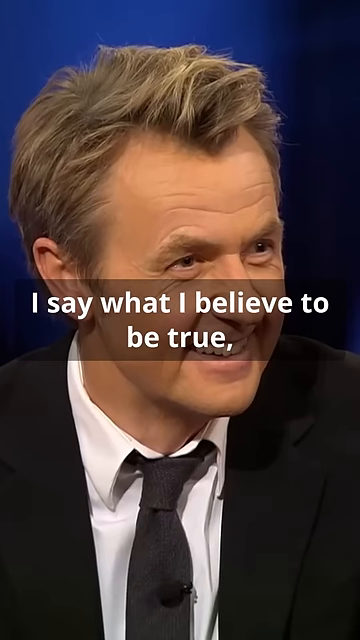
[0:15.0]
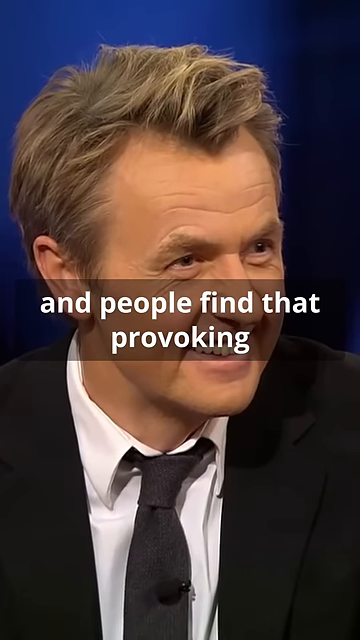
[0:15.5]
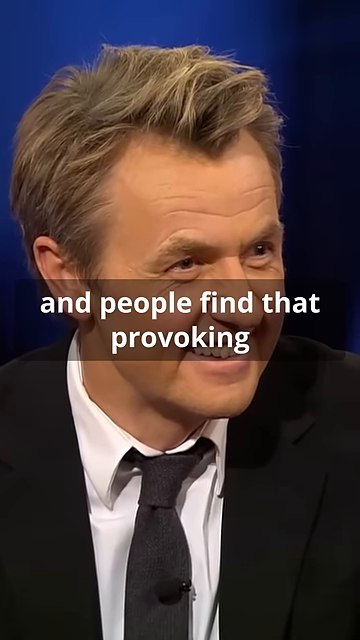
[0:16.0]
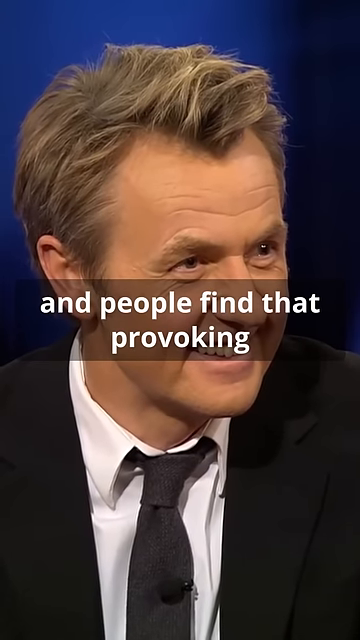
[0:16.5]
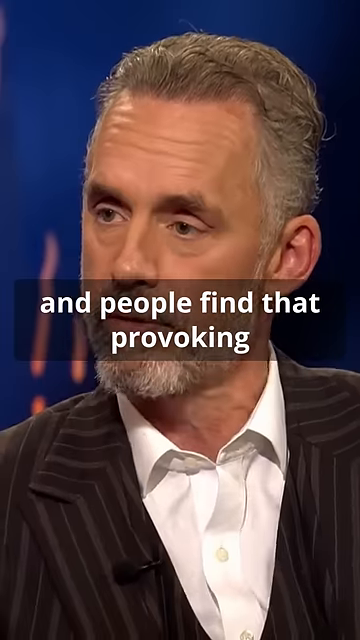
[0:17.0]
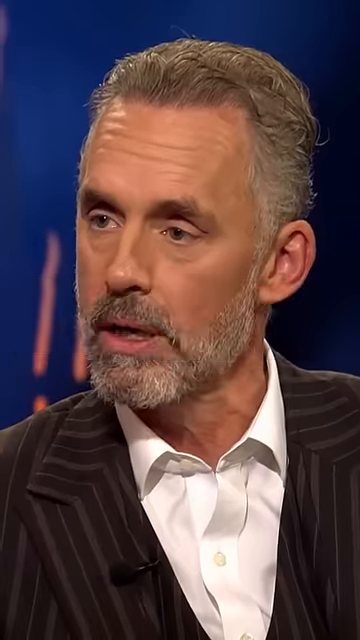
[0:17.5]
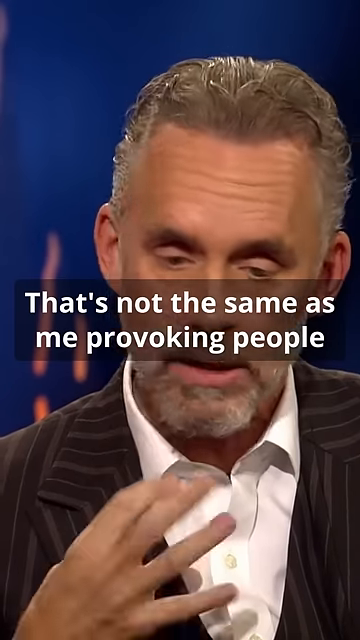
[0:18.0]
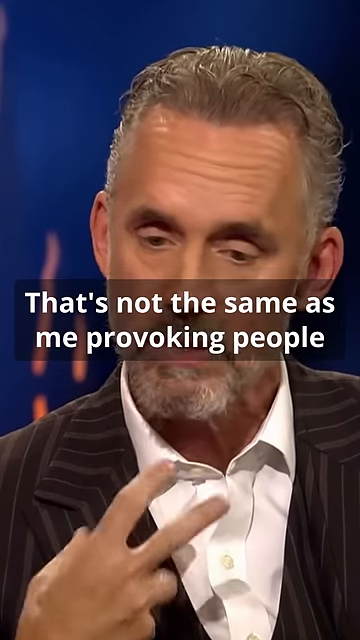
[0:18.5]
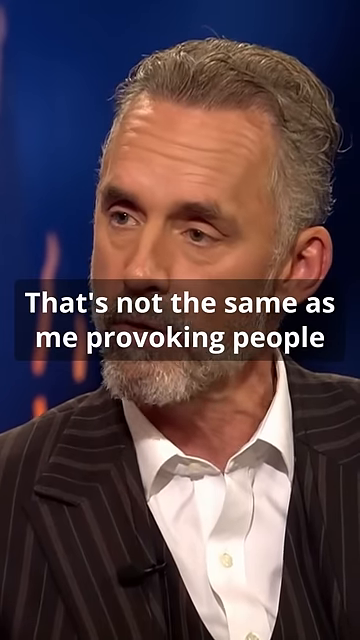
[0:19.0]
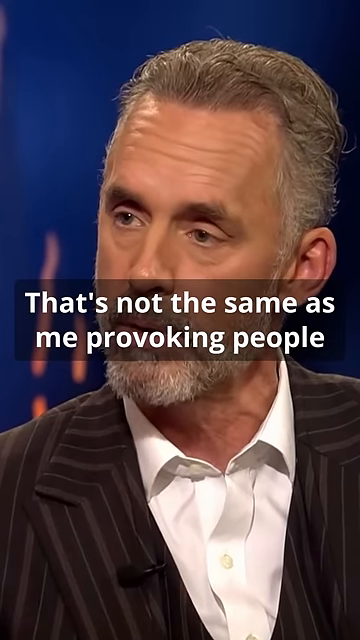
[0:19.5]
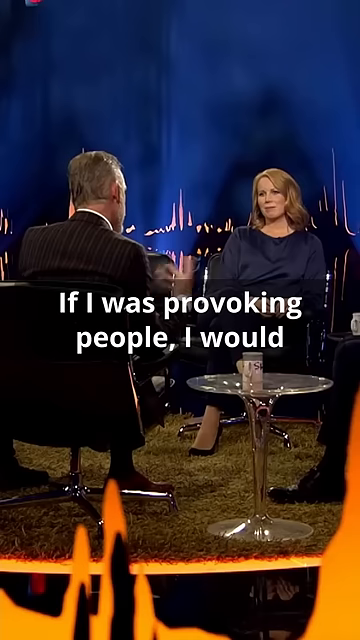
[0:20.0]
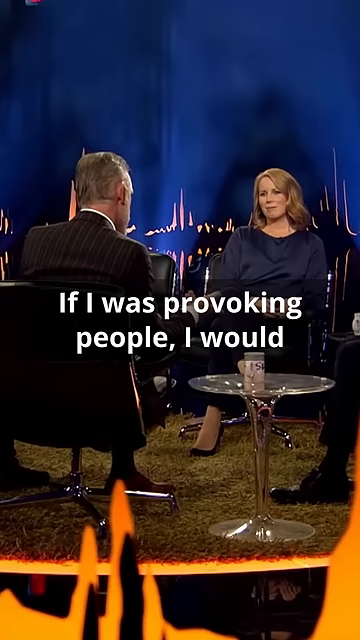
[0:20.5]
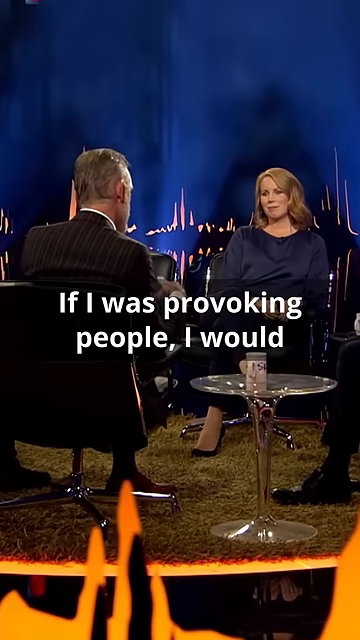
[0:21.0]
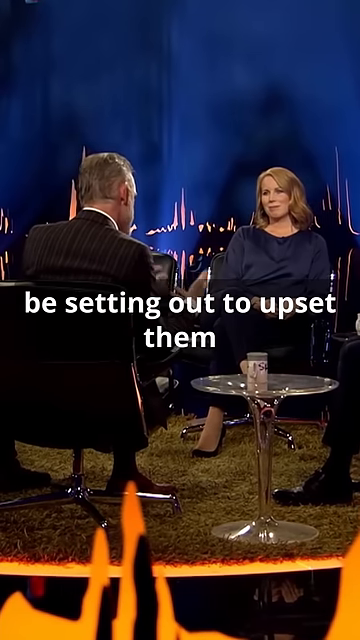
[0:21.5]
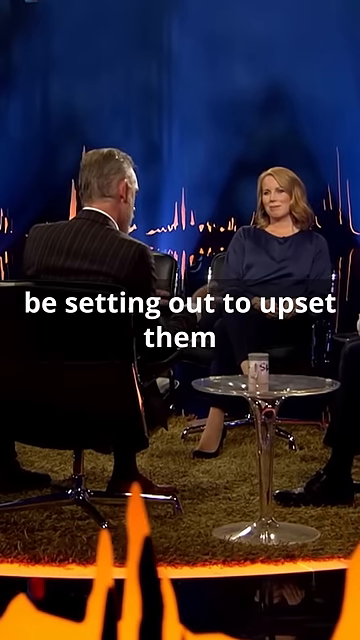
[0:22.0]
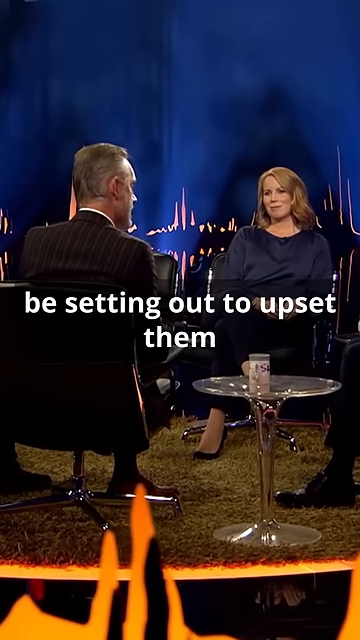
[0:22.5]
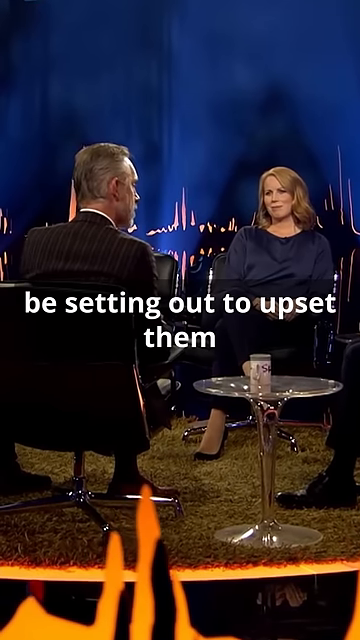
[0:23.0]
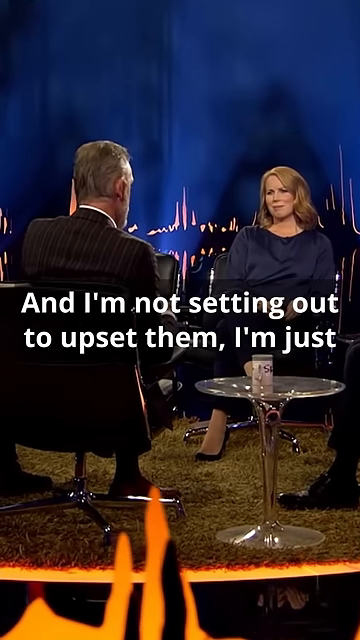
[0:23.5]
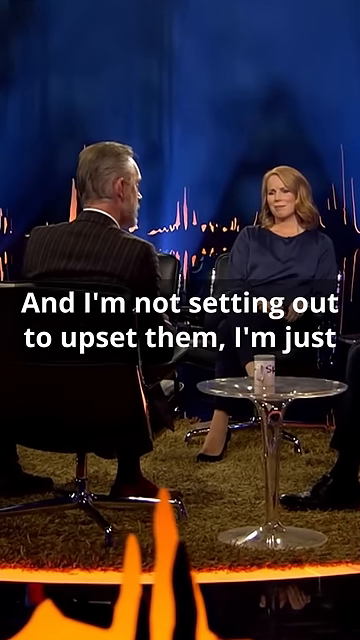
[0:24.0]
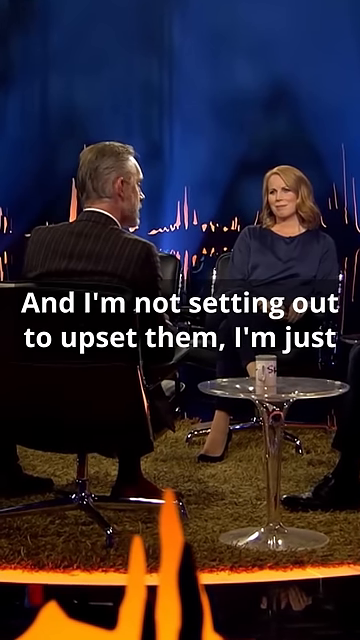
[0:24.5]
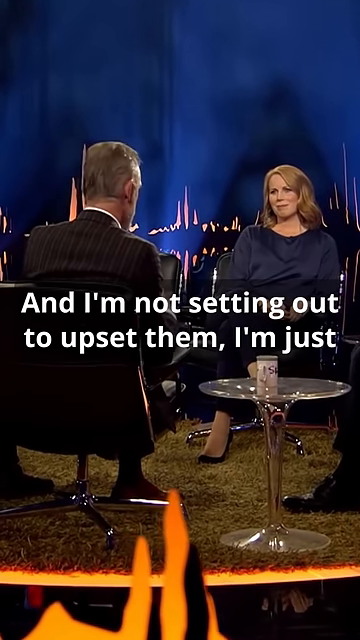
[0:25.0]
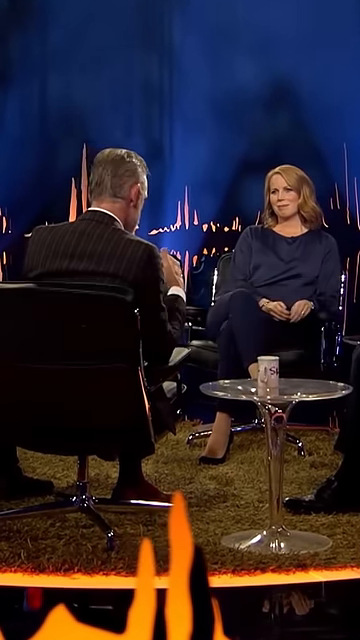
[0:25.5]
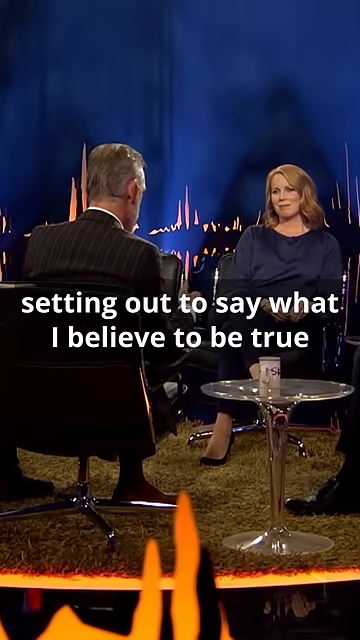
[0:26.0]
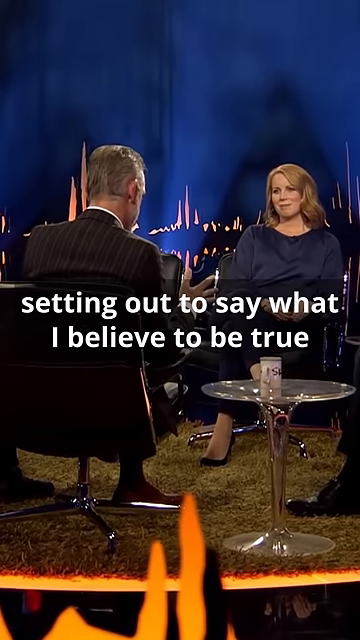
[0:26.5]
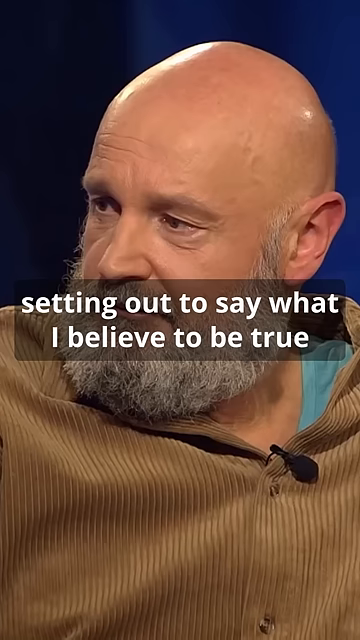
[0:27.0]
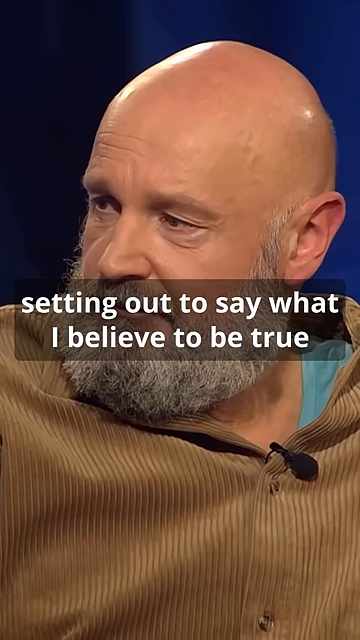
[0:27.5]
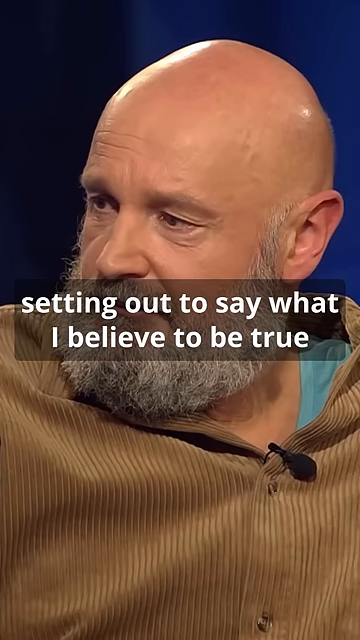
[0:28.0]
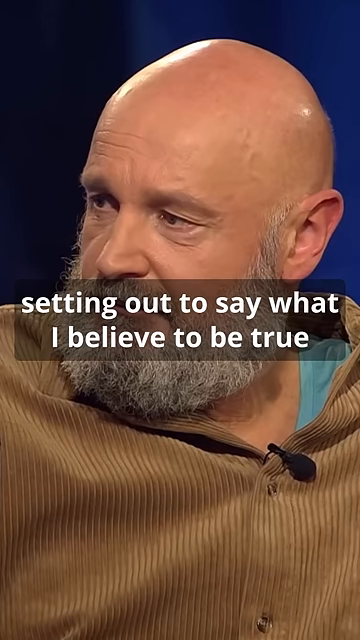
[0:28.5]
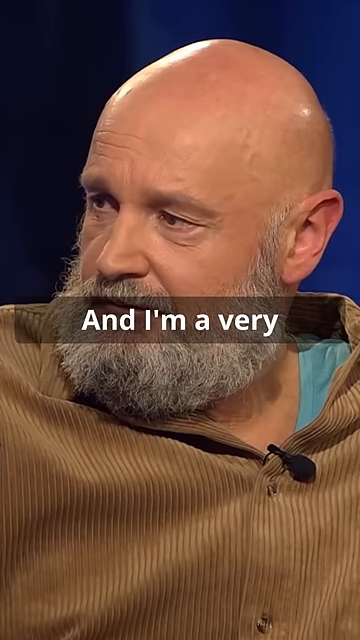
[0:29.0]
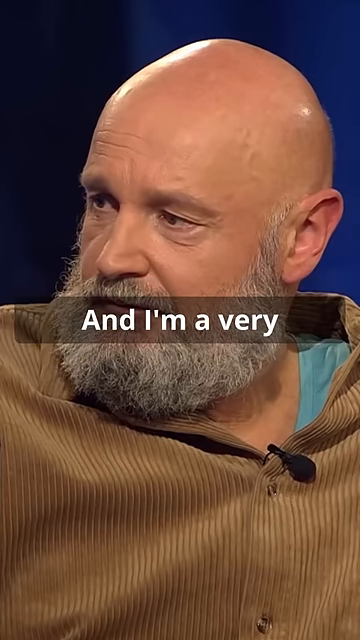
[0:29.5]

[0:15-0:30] The interview continues with captions flashing over the speakers' heads. The caption "I say what I believe to be true" appears while the interviewer smiles on screen, followed by "and people find that provoking". As the interviewer smiles, the camera switches back to Jordan Peterson, who says, "that's not the same as me provoking people." He gestures with one hand as he talks, and the camera is focused on him. A wide shot then shows Peterson sitting across from a woman in a blue dress, with a circular glass table between them, on a set with what looks like a blue curtain in the background. The caption reads "if I was provoking people, I would be setting out to upset them, and I'm not setting out to upset them, I'm just setting out to say what I believe to be true". The scene then switches to a bald man with a gray beard and a brown shirt, and the camera focuses on him as the captions continue with "and I'm a very, so you are following the rule".